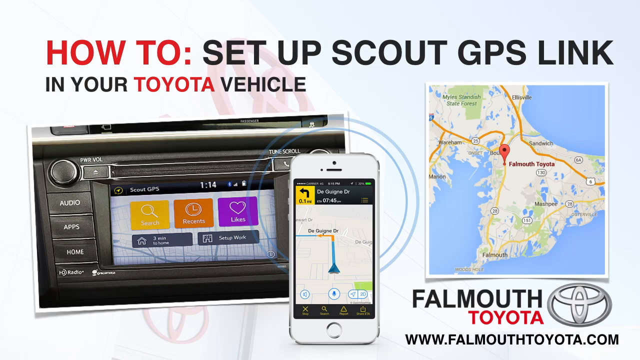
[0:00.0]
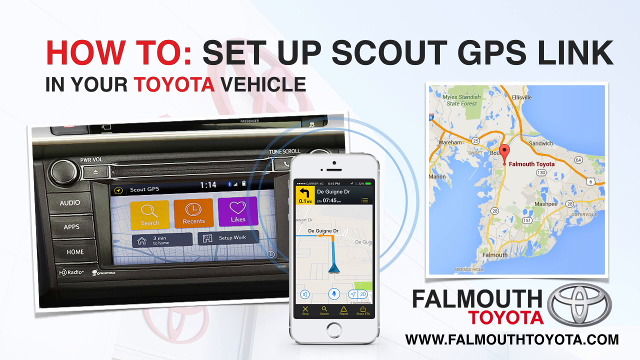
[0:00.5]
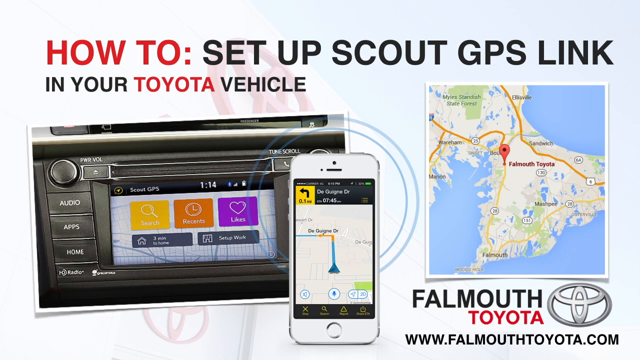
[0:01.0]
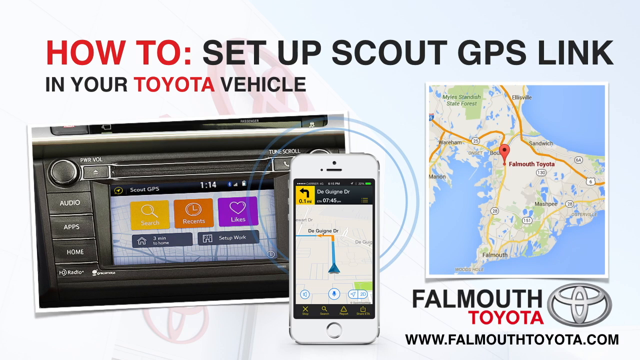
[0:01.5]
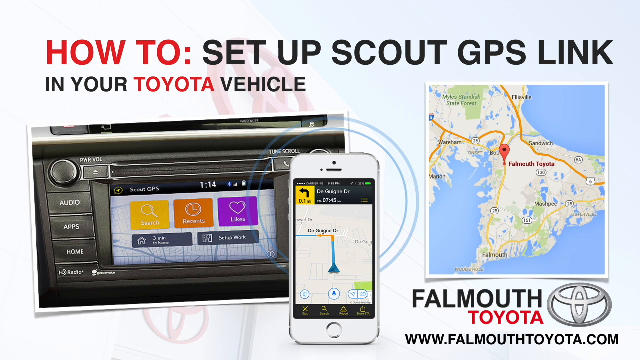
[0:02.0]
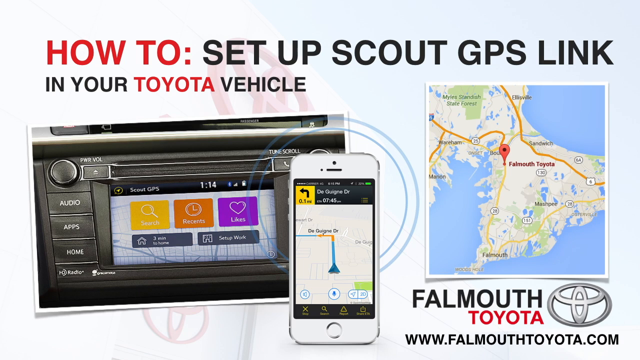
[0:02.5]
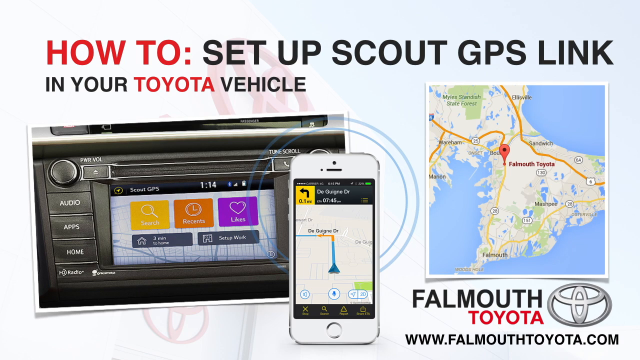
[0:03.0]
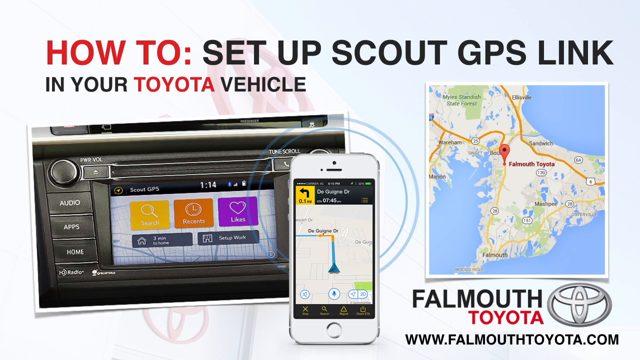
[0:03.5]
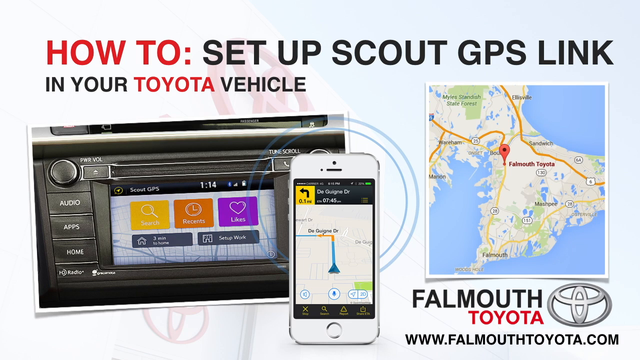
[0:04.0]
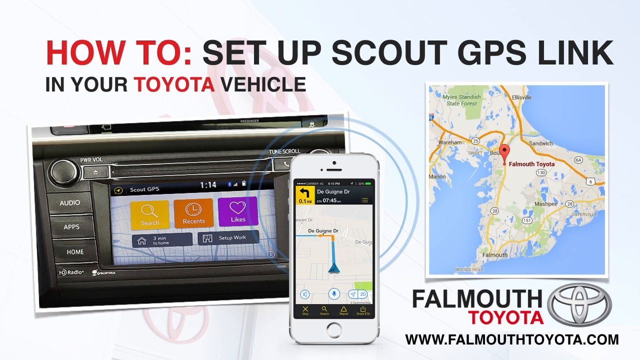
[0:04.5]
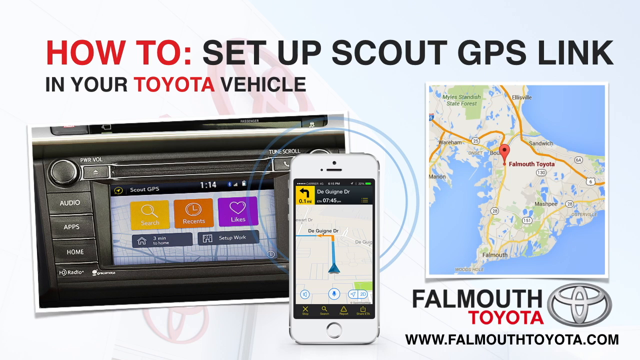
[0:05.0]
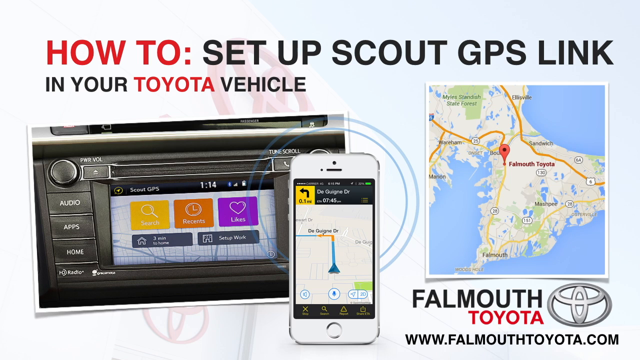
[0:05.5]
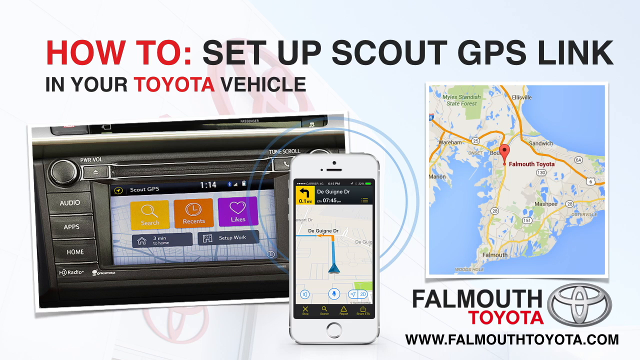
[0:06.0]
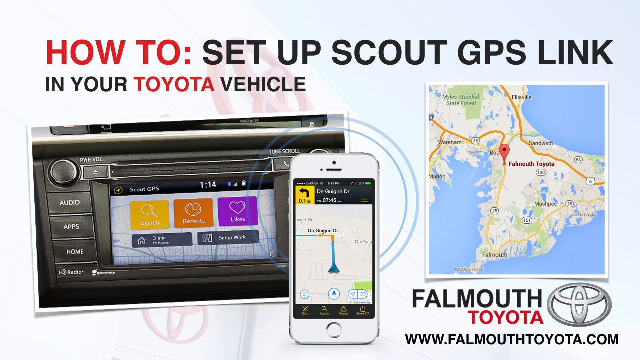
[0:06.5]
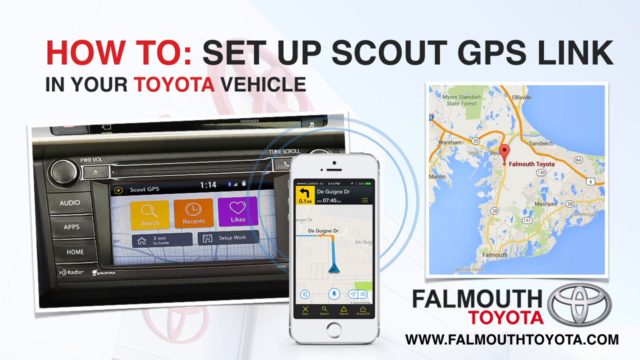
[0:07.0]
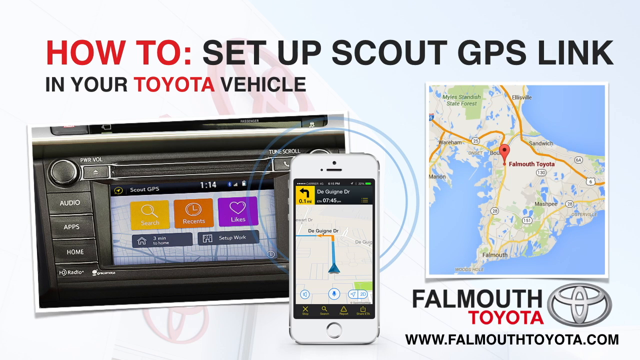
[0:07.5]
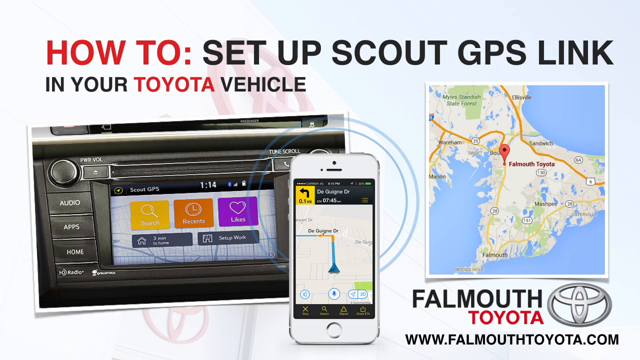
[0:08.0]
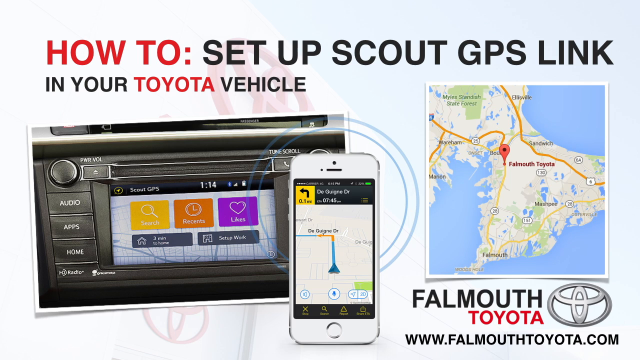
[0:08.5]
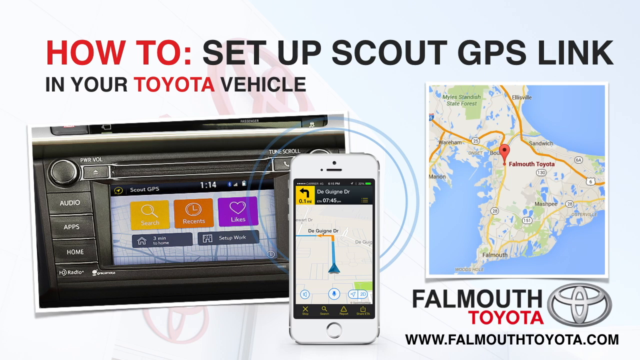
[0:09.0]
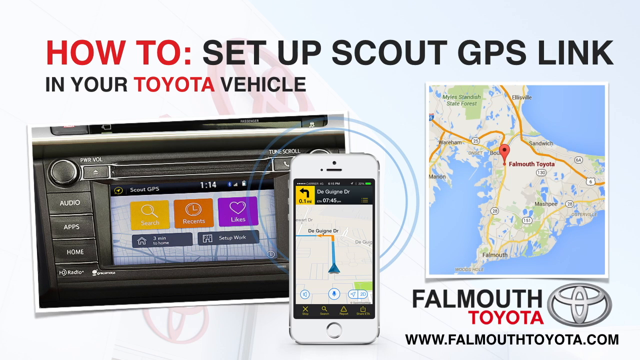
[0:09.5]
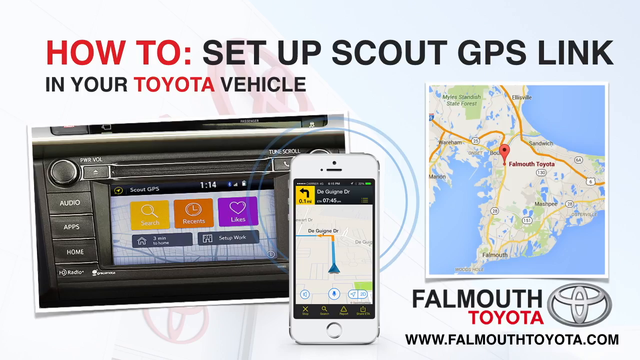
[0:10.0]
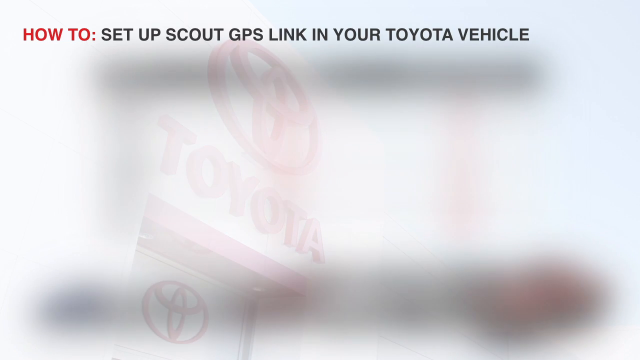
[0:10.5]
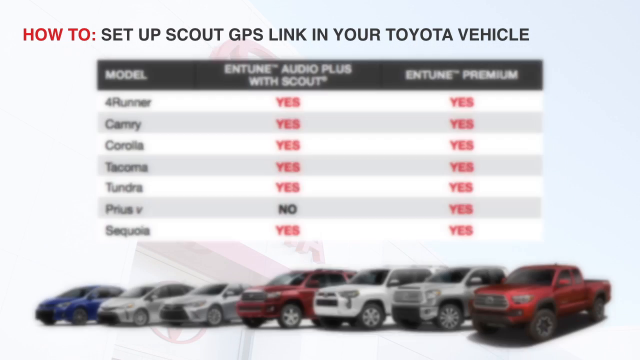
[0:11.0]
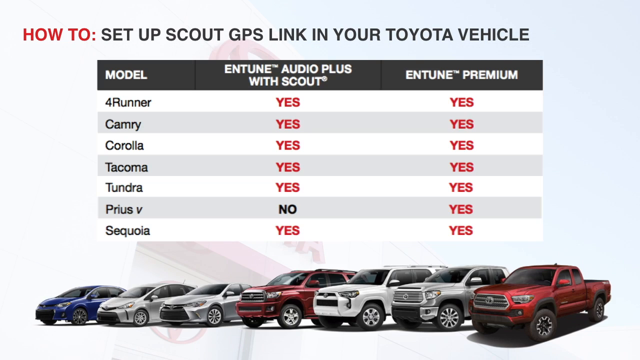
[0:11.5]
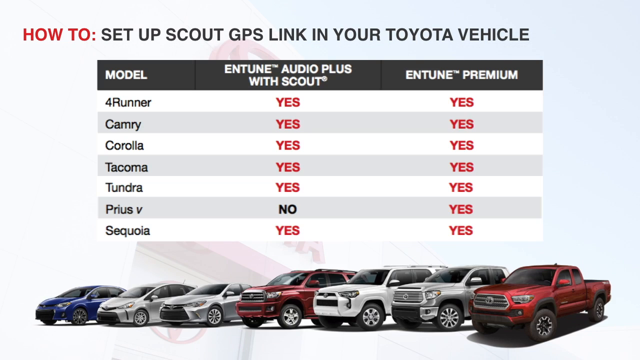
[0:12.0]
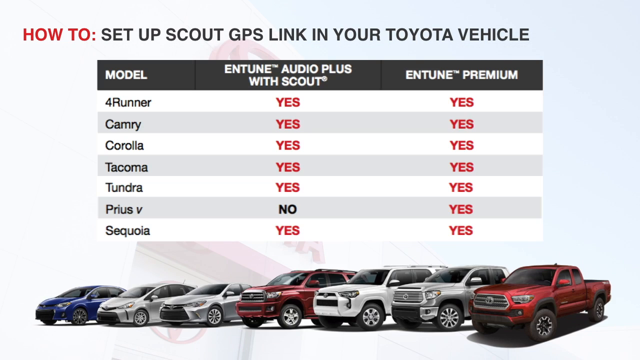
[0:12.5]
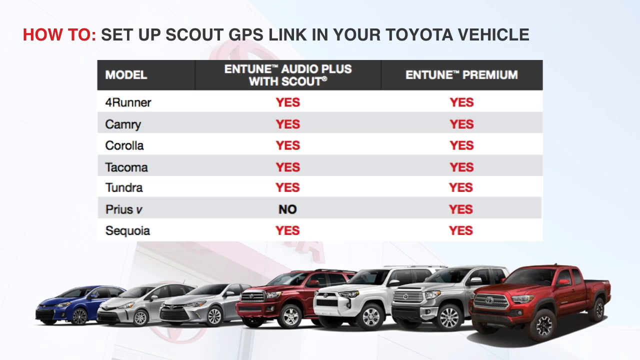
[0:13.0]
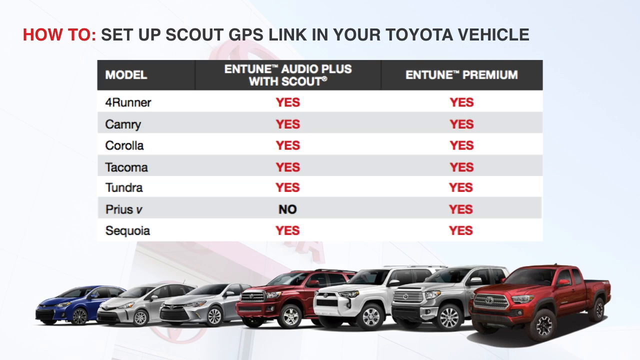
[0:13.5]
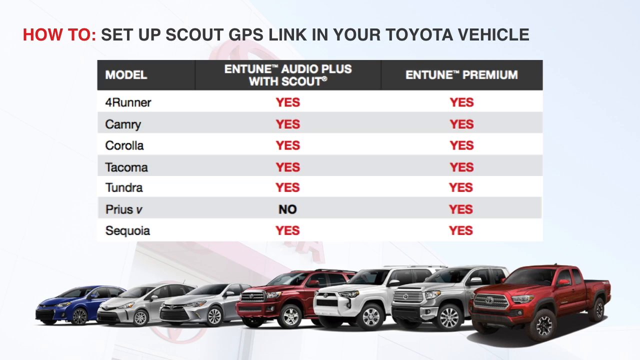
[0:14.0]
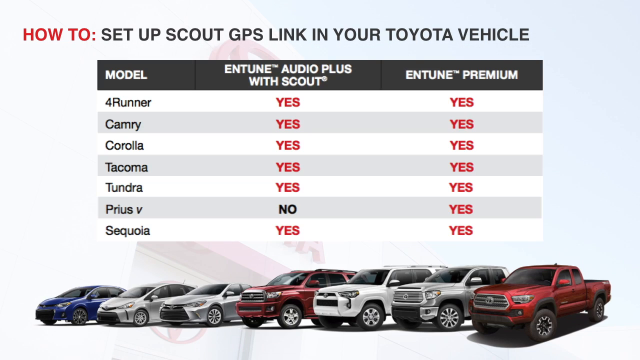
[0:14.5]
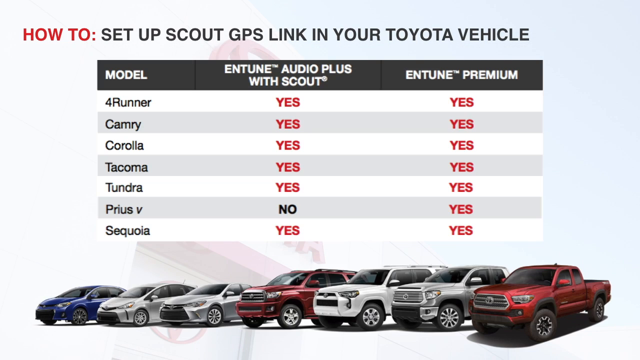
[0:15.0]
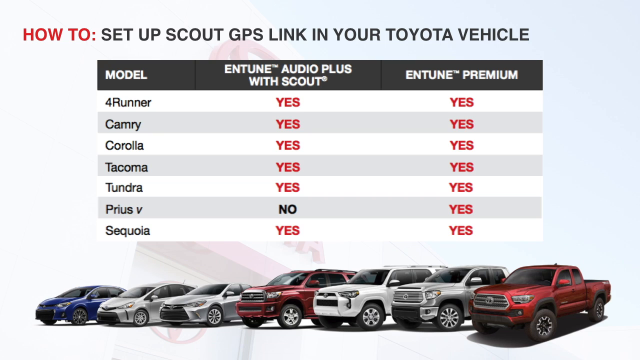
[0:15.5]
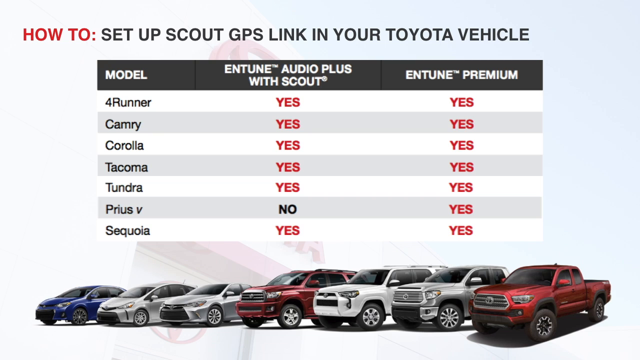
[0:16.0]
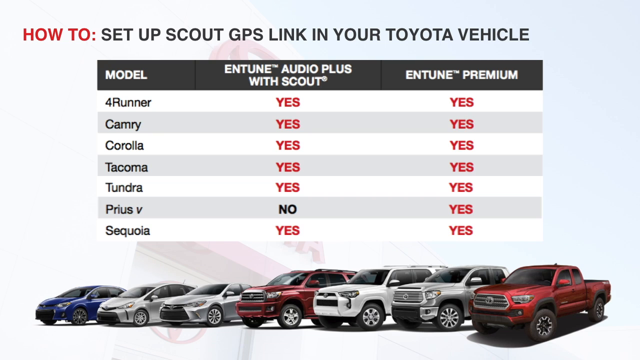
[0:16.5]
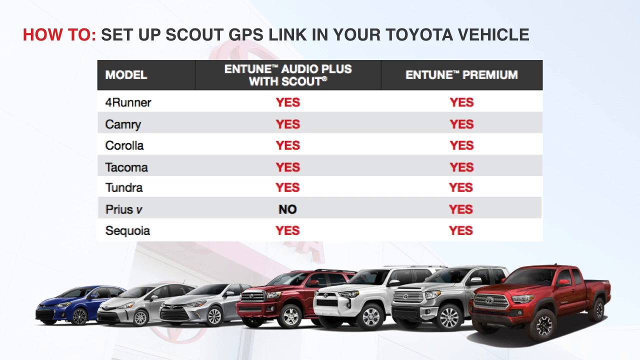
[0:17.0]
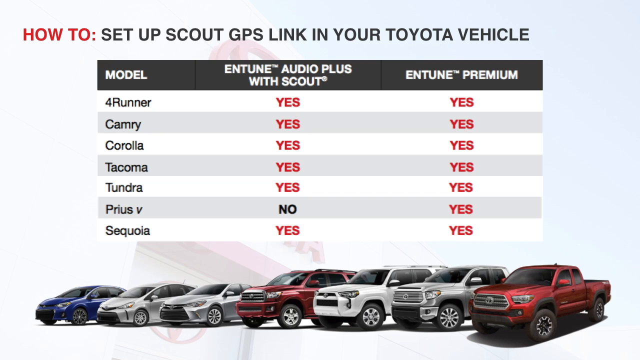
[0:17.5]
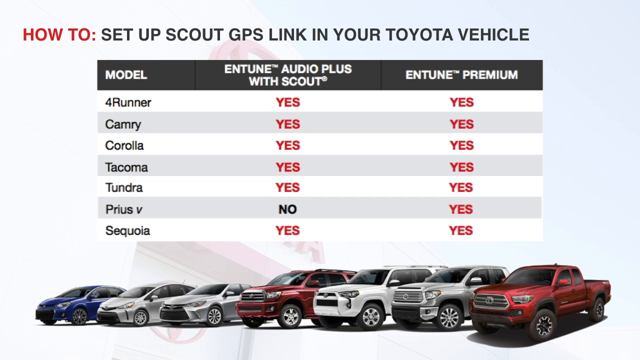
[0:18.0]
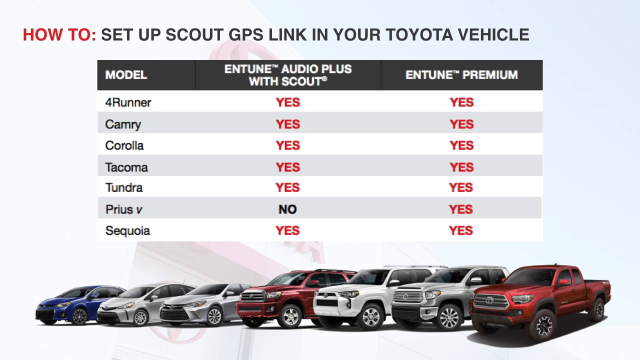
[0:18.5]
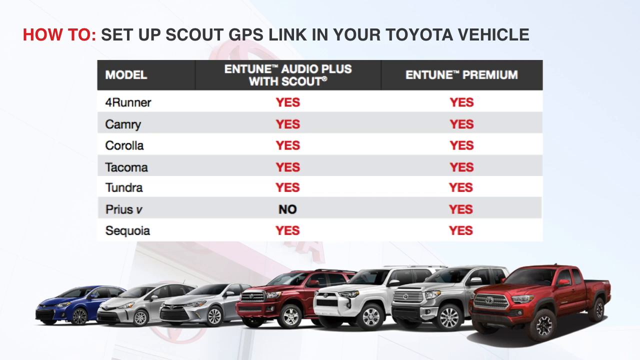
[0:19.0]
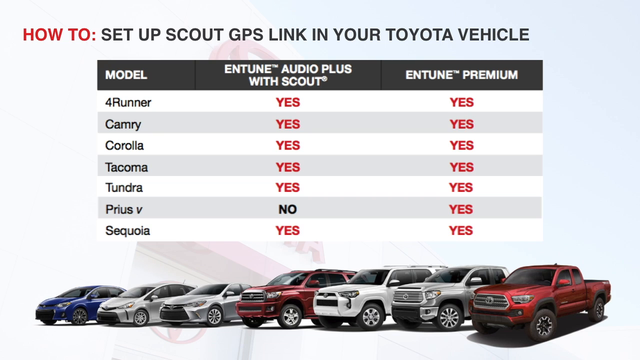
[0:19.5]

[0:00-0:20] At the very beginning, on-screen text reads "how to" and then "set up a Scout GPS link in your Toyota vehicle," so the video is apparently a tutorial on how to do that. The text is at the top; "how to" and "Toyota" are red and everything else is black. Right below the text are some pictures: the one on the right is a map, like a Google map, and the one on the left shows the actual Toyota vehicle GPS inside the vehicle, as well as kind of a phone app for it. After that, a comparison chart appears showing different car models and whether each has Entune Premium or Entune Audio Plus with Scout.